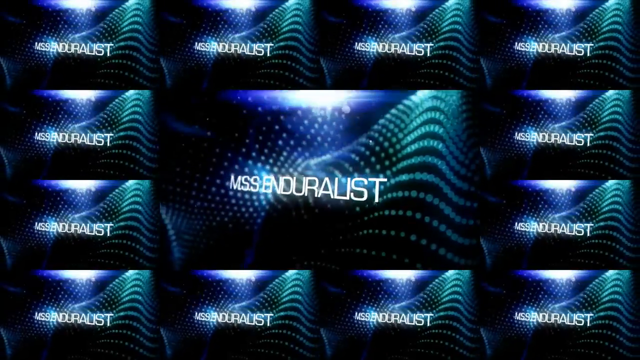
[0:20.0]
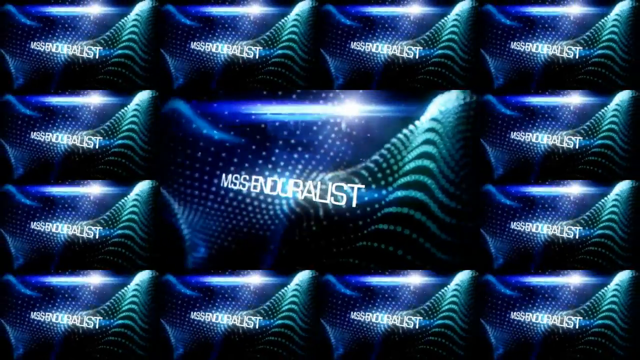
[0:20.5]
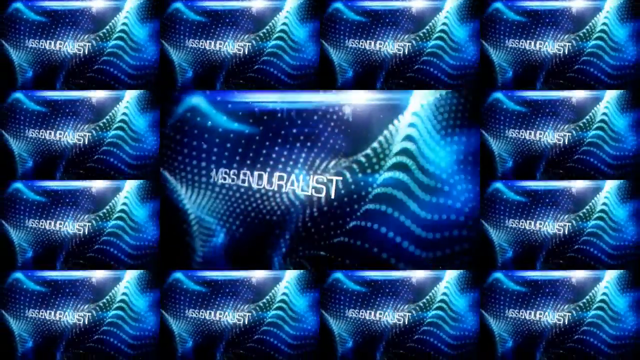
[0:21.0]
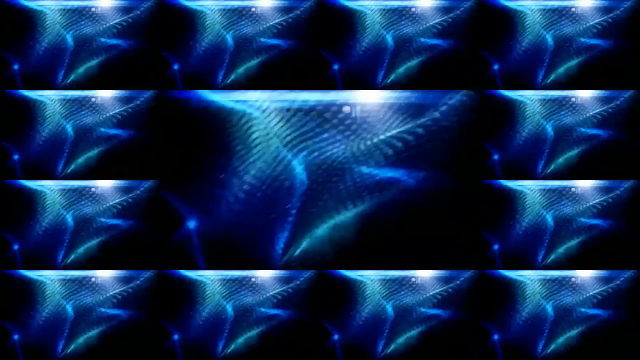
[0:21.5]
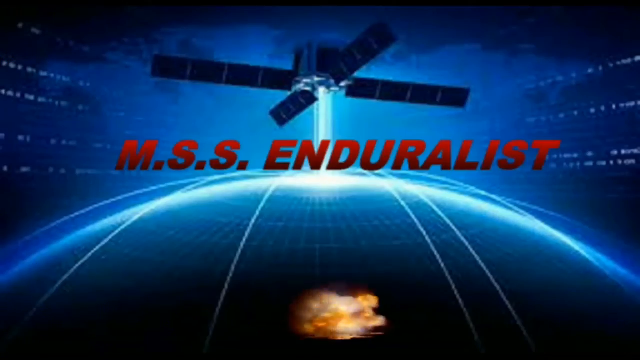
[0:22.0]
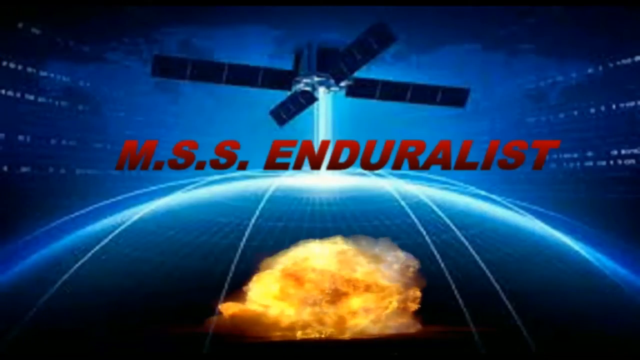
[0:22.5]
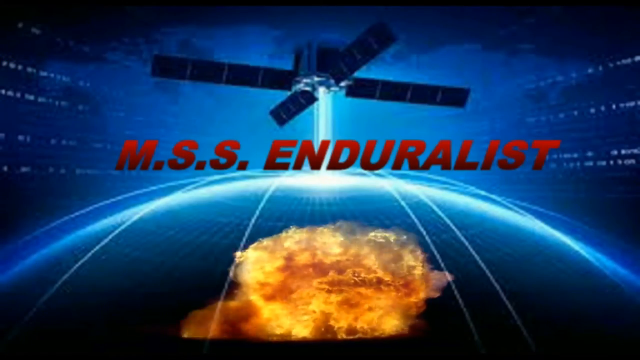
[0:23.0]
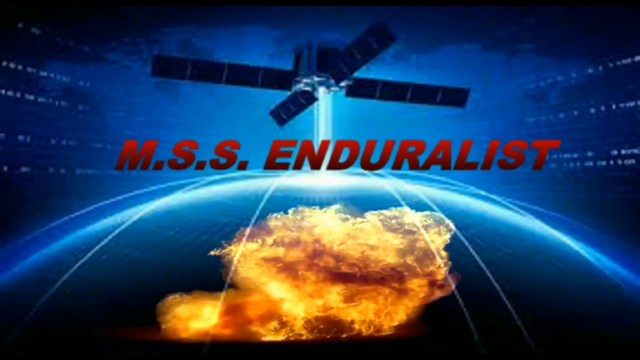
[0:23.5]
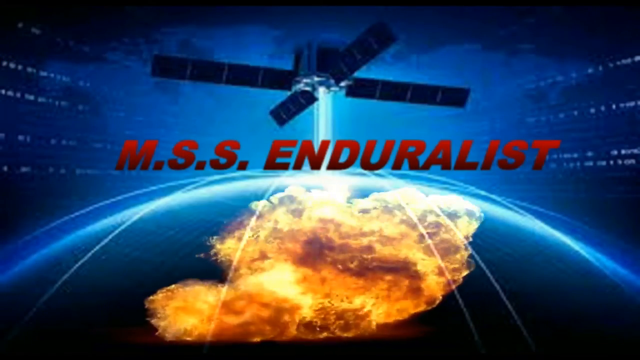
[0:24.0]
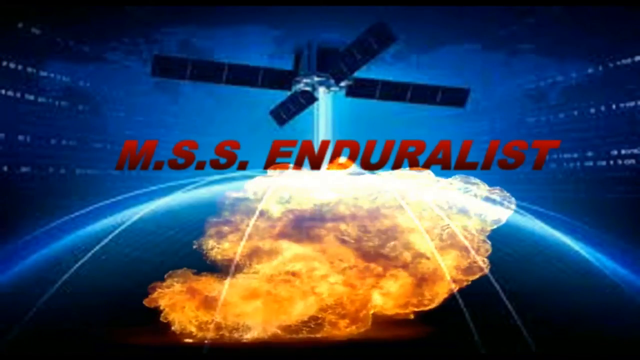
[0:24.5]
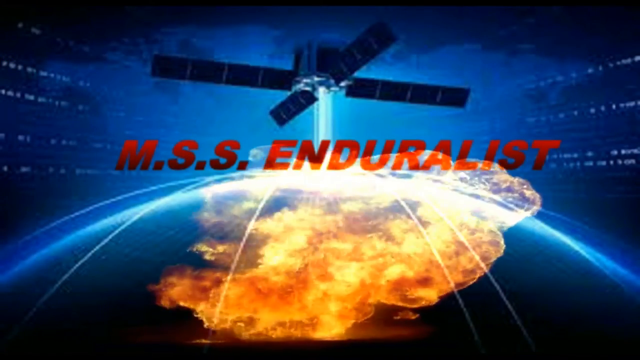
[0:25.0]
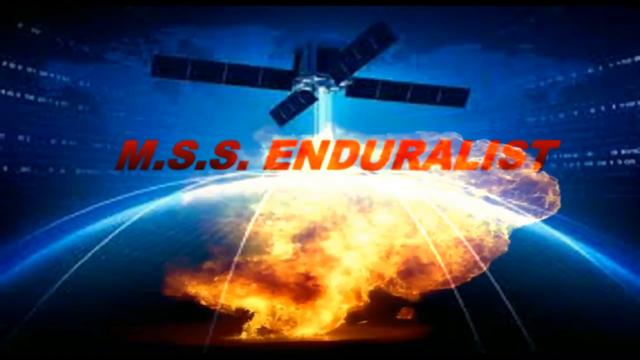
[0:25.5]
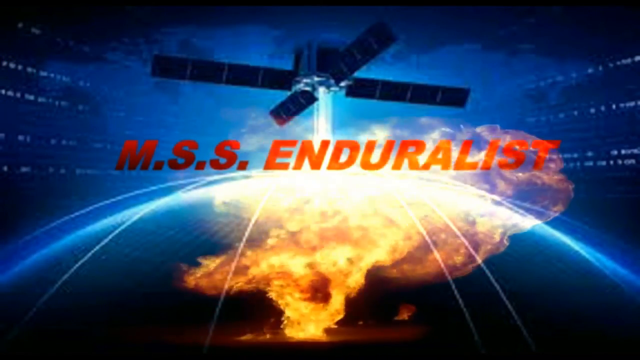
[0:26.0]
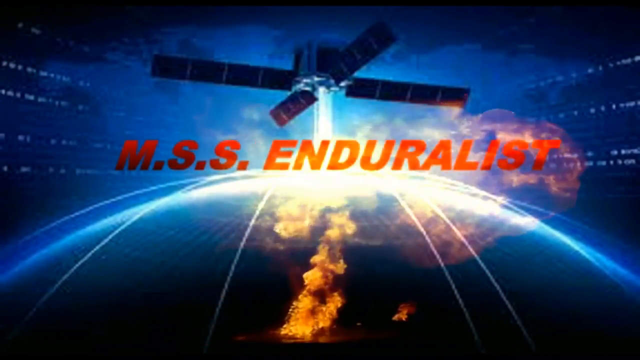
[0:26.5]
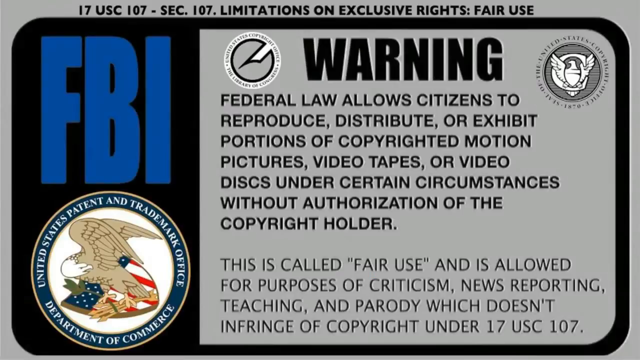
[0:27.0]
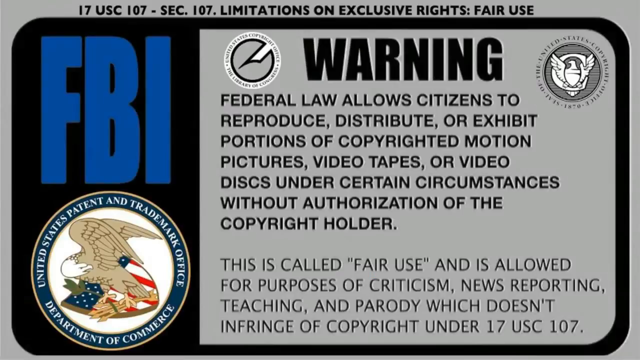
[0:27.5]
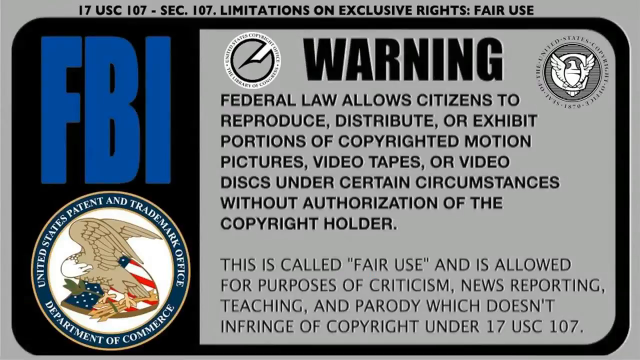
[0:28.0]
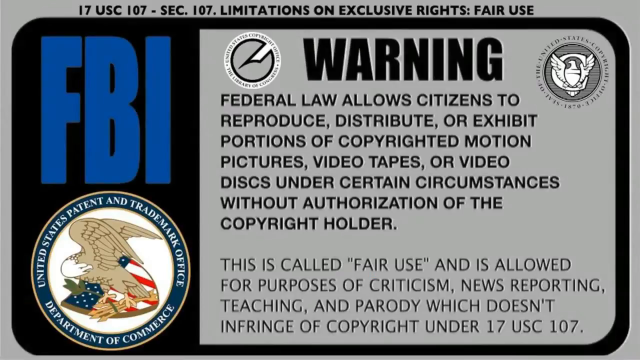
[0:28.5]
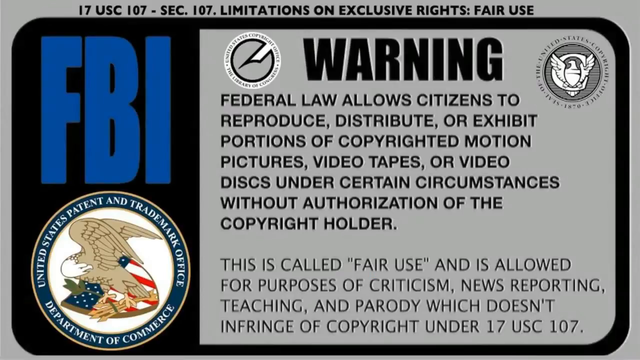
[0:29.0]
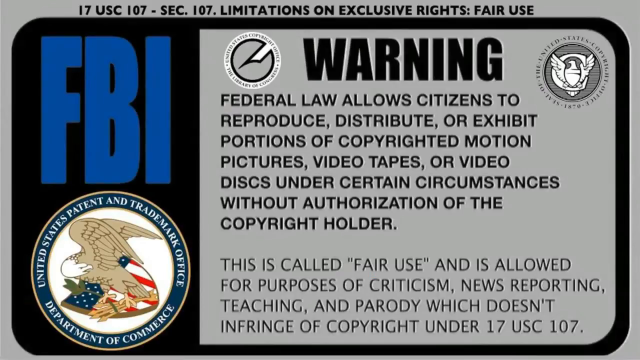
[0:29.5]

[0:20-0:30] An introductory title screen shows the name "M.S.S. Enduralist" over a background that looks like rows of dots arranged in wavy patterns; the dots are blue and green and appear to move like waves. The title sits on a large rectangular screen in the middle, surrounded by smaller screens, 12 in total, repeated around the edges. As this fades, another screen shows what looks like a satellite hovering above a stylized globe with longitudinal lines around it. "M.S.S. Enduralist" appears under this, and below it what looks like an explosion on the globe eventually encompasses most of the screen with a fireball. An FBI warning then appears saying that the material cannot be distributed without authorization because it is copyrighted.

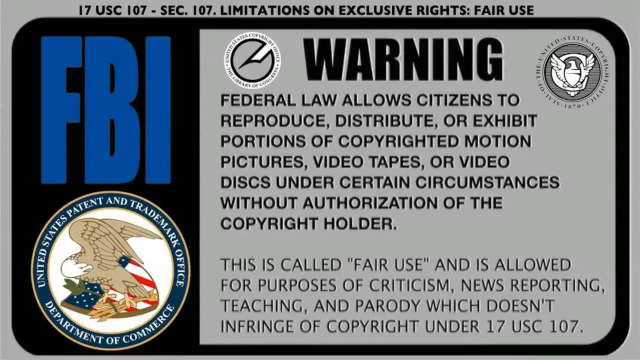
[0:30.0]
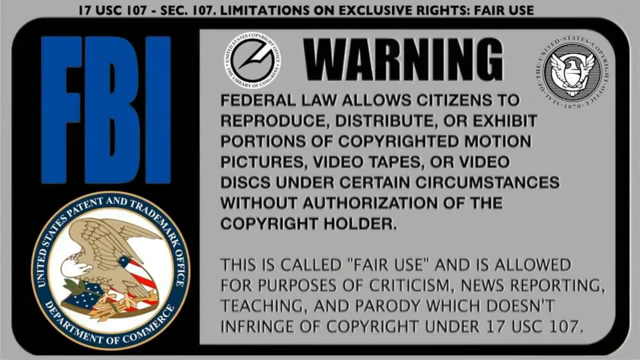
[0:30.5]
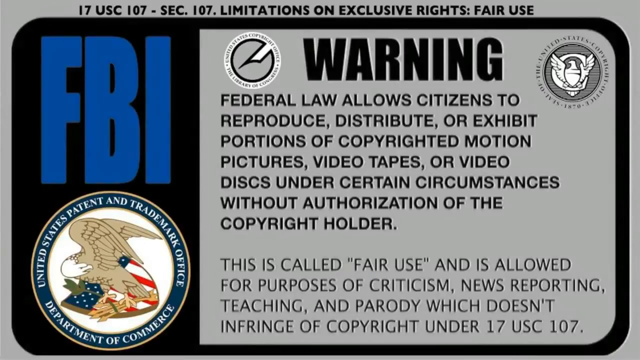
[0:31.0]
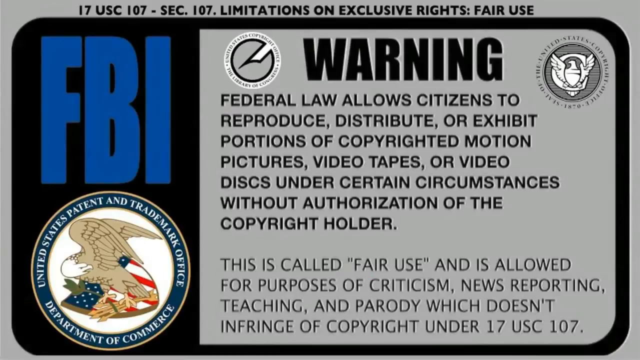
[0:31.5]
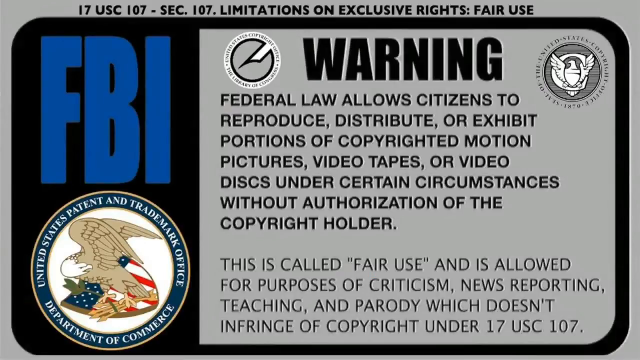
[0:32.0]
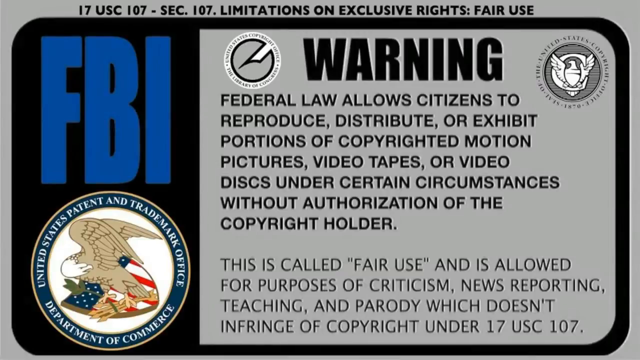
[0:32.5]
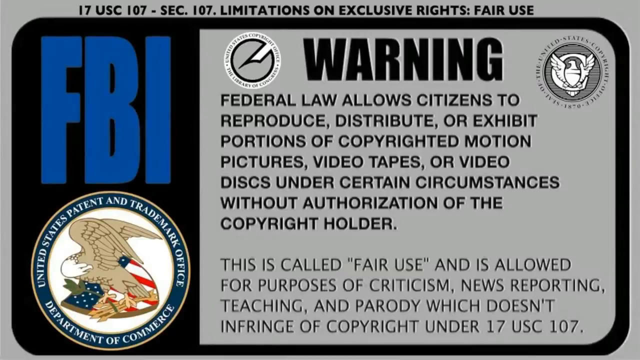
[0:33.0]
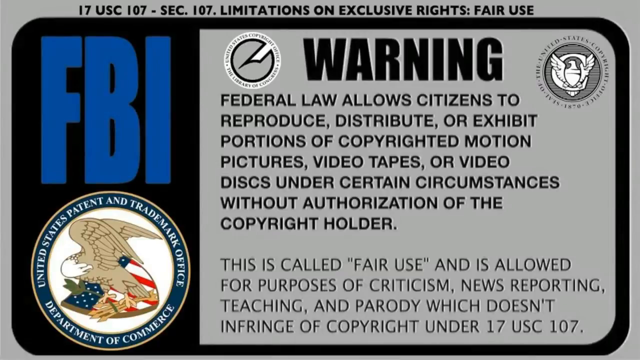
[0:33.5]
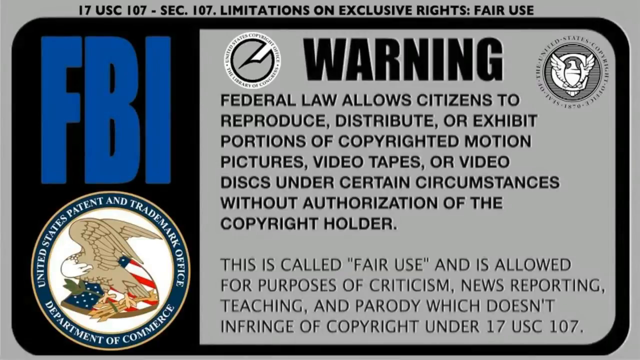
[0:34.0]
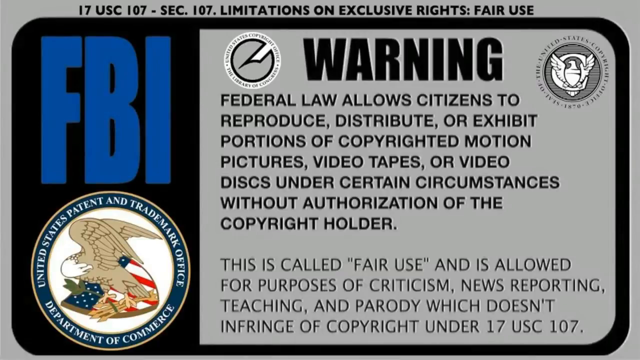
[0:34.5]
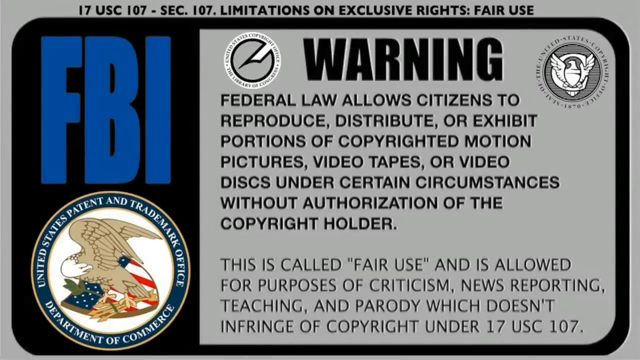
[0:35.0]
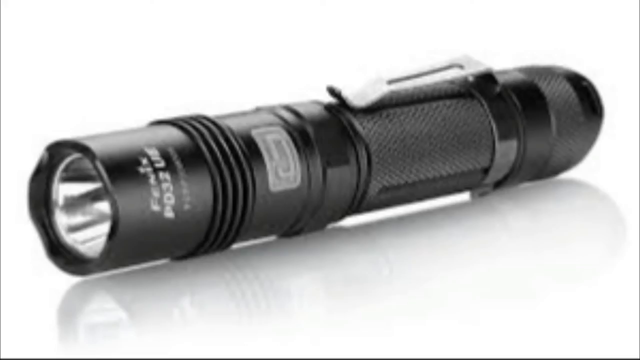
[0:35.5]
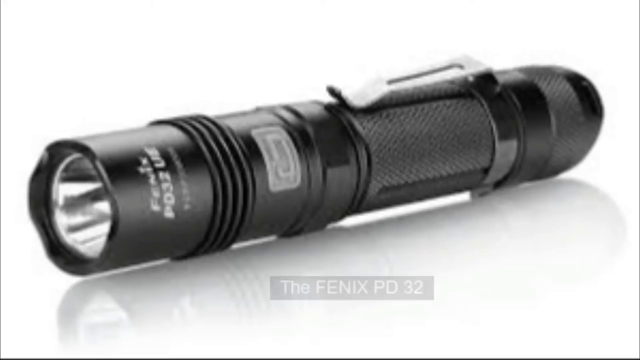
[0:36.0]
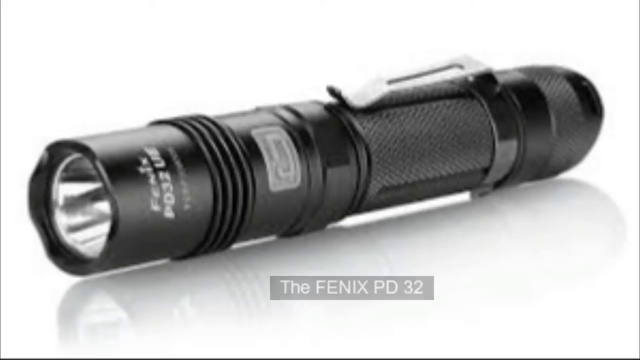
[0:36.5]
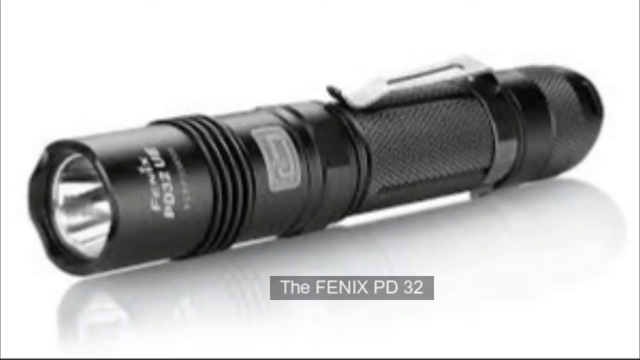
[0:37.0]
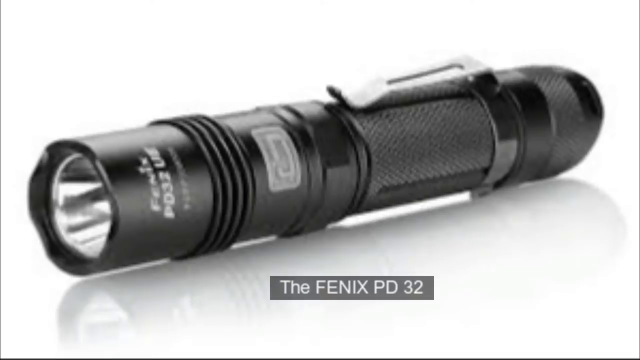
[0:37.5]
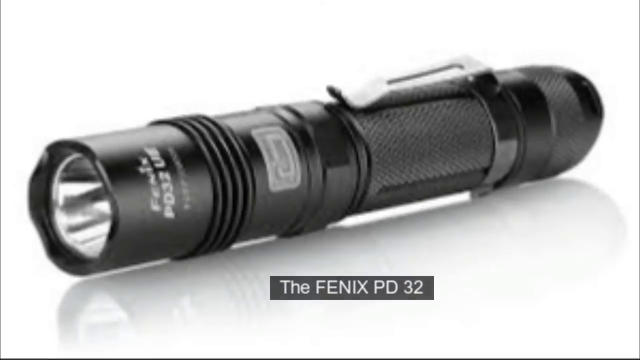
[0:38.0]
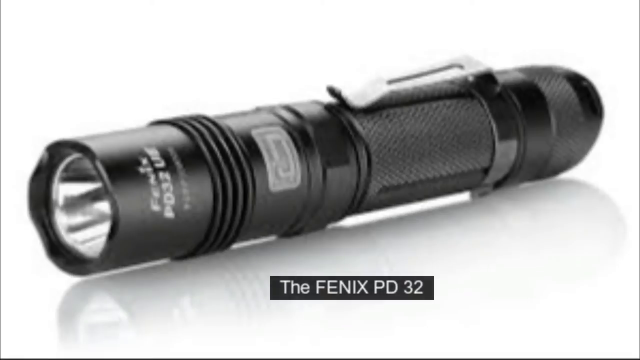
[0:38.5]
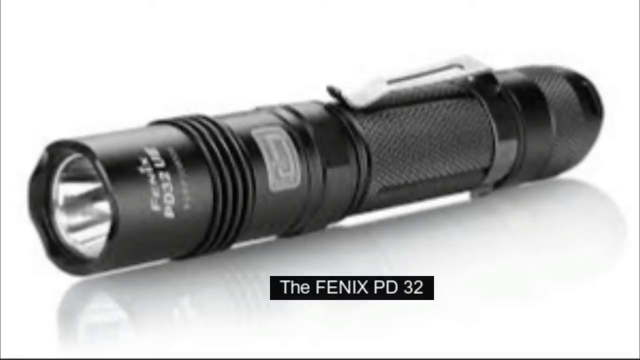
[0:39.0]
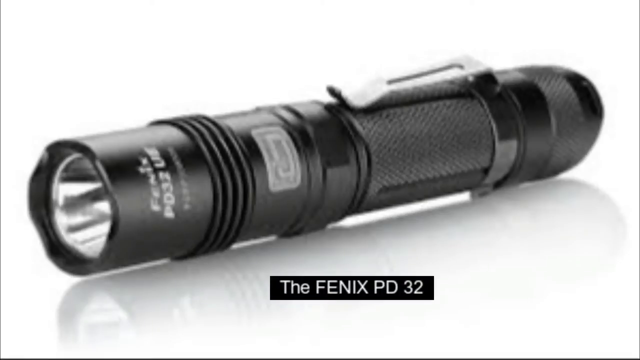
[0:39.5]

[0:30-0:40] An FBI warning states that federal law prohibits the unauthorized reproduction, distribution, or exhibition of copyrighted material under certain circumstances without authorization of the copyright holder unless it is fair use for criticism, news reporting, teaching, or parody. The FBI seal is visible on the left side of the screen. The scene changes to a small black device that looks like a flashlight resting on a white surface, with writing near the end of the device. Below it, the name "The FENIX PD 32" appears in a black text bar. The background is entirely white.